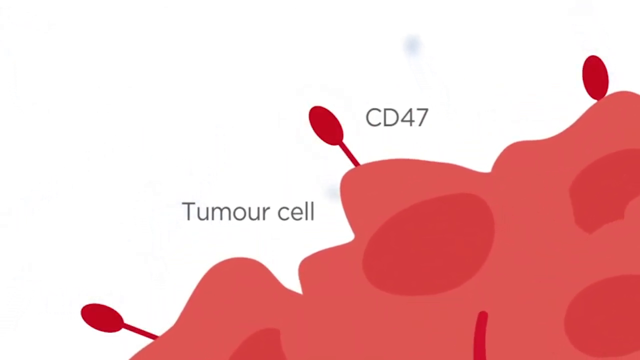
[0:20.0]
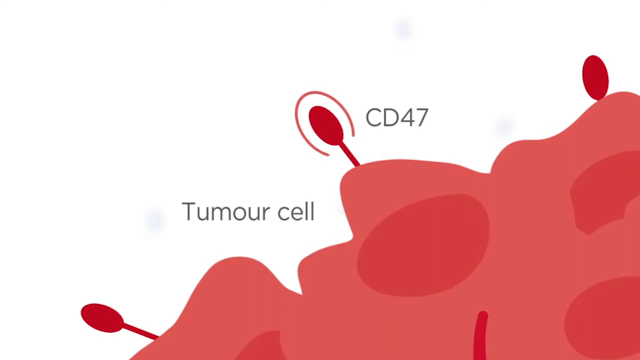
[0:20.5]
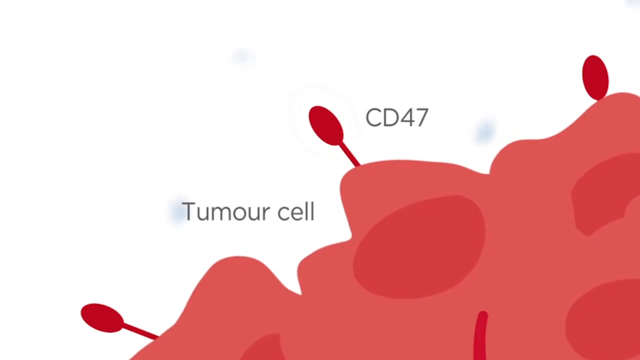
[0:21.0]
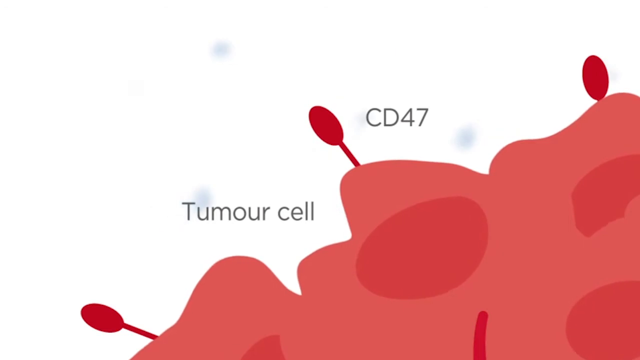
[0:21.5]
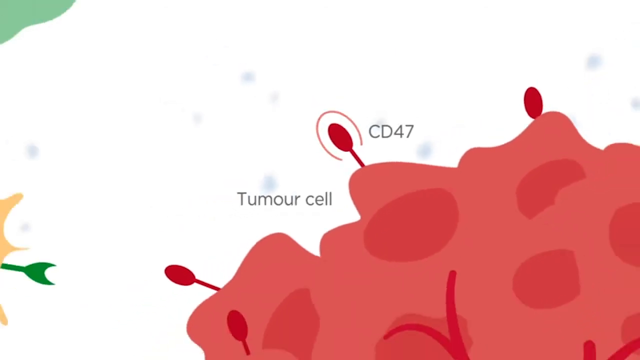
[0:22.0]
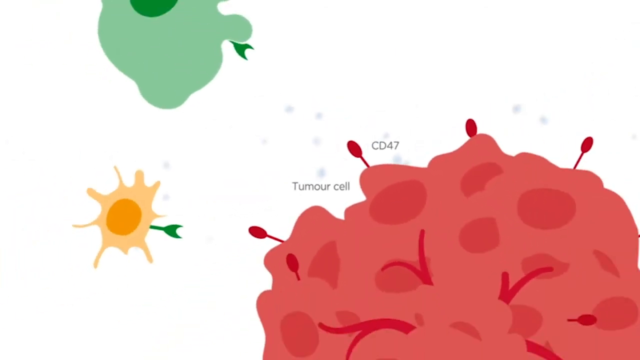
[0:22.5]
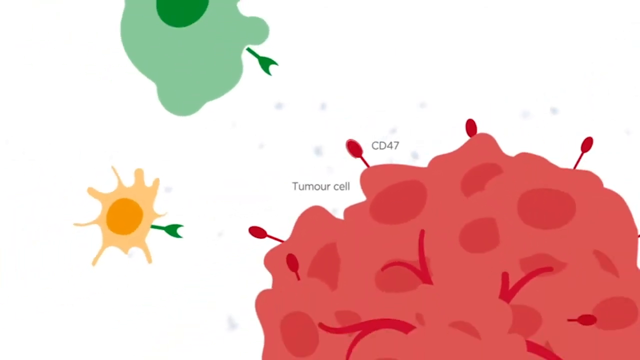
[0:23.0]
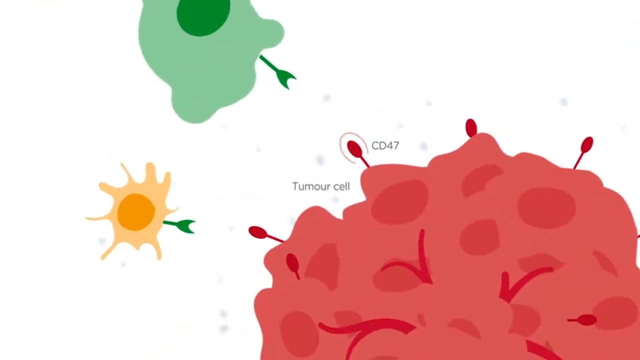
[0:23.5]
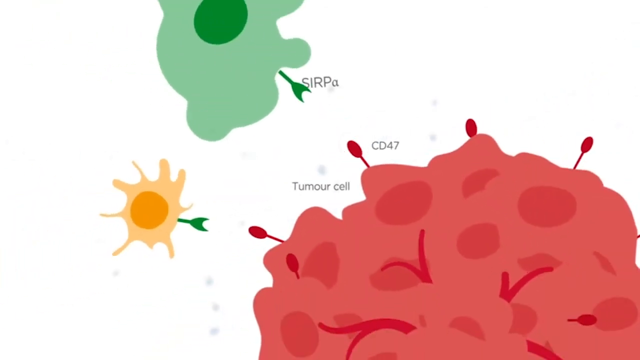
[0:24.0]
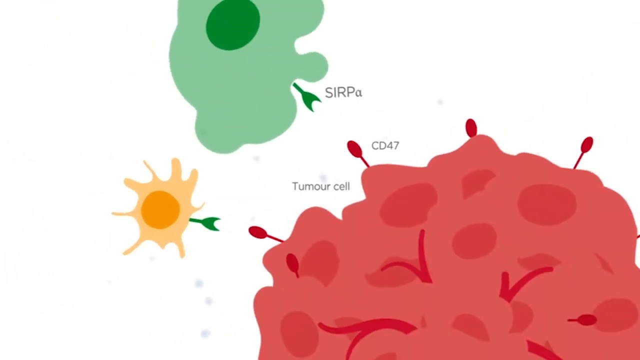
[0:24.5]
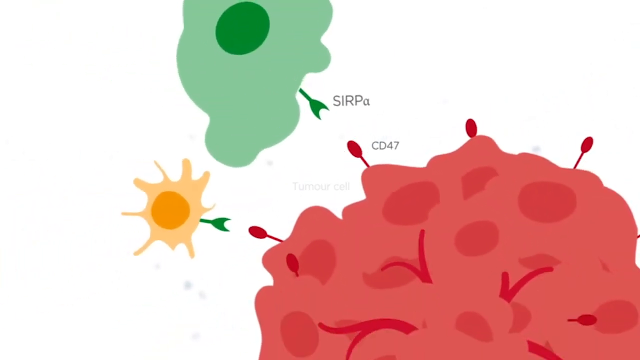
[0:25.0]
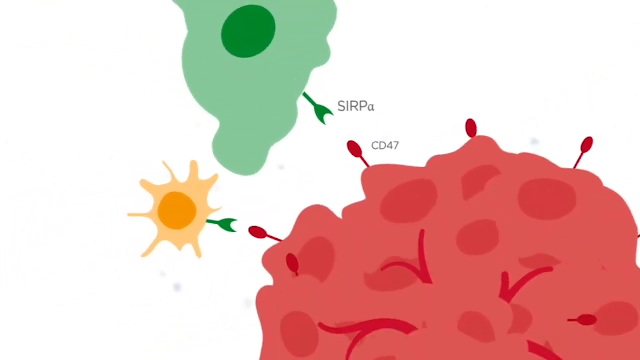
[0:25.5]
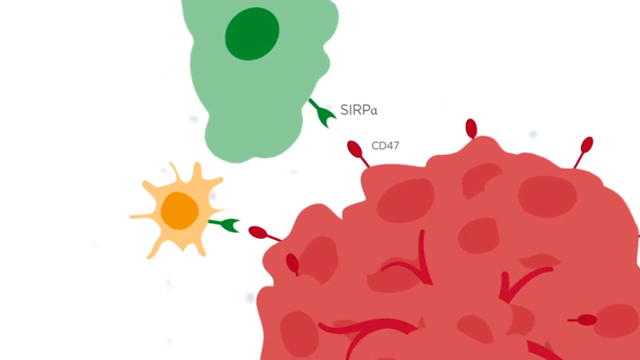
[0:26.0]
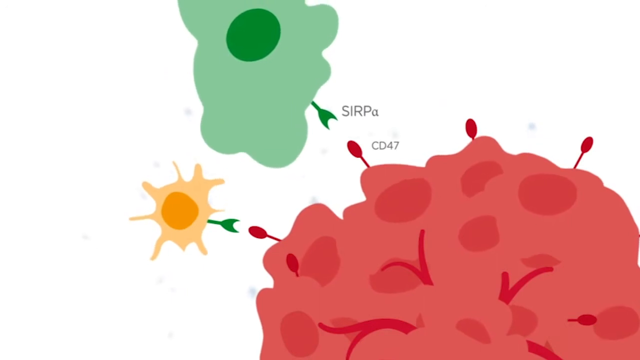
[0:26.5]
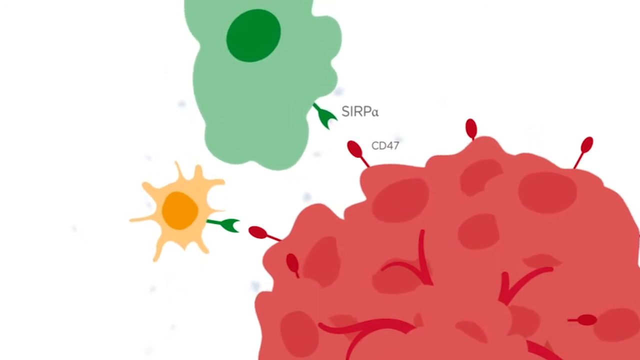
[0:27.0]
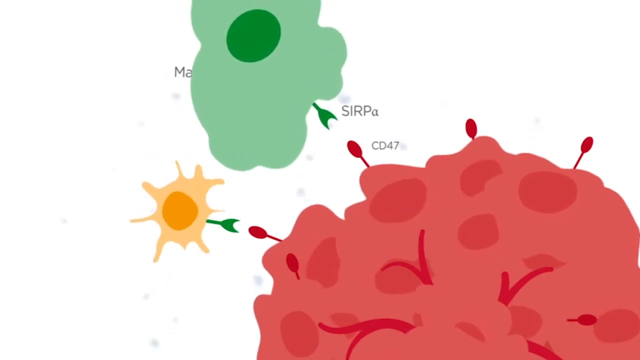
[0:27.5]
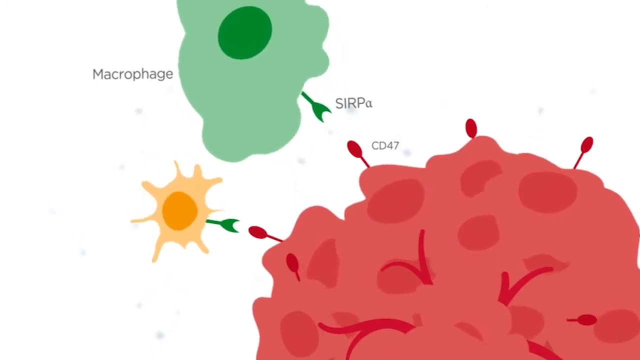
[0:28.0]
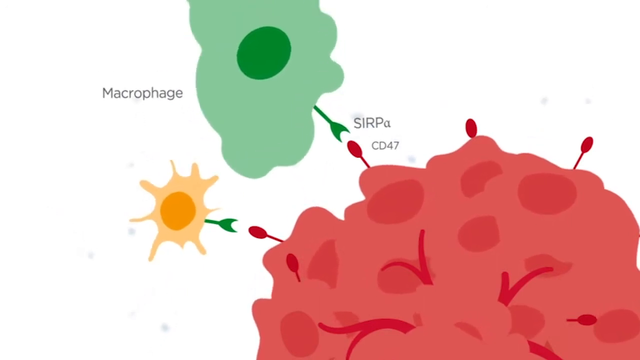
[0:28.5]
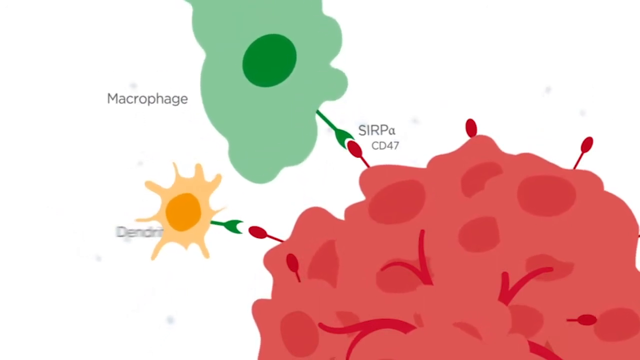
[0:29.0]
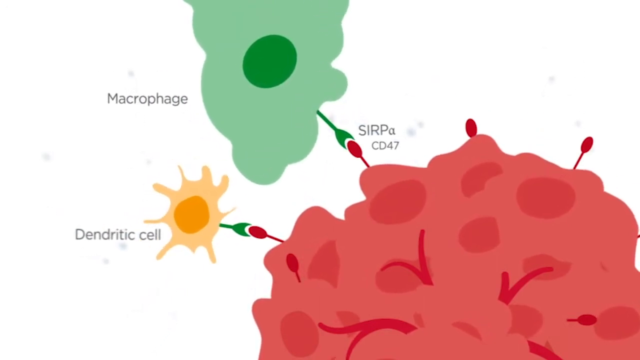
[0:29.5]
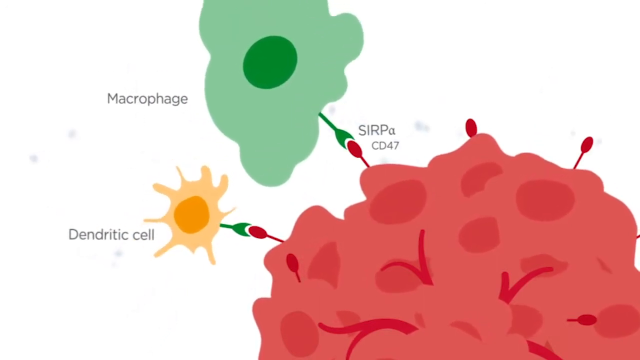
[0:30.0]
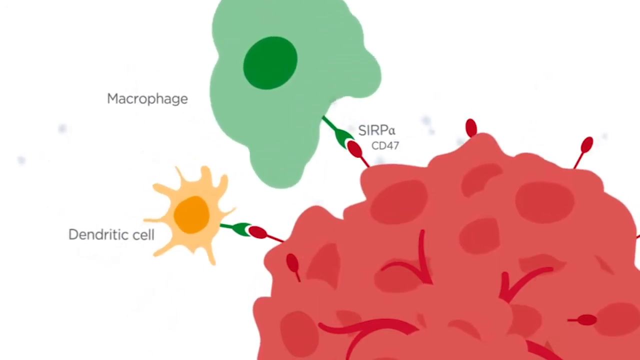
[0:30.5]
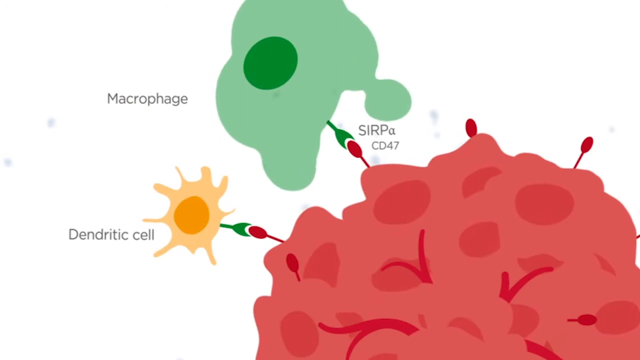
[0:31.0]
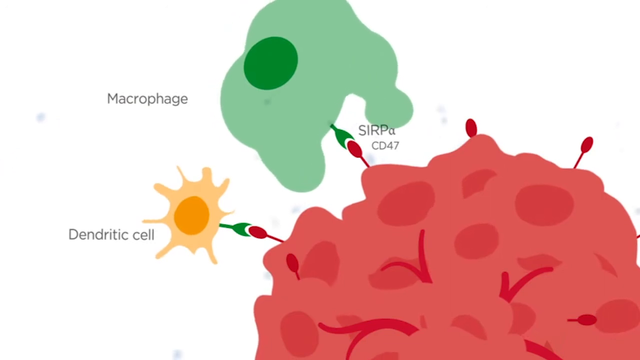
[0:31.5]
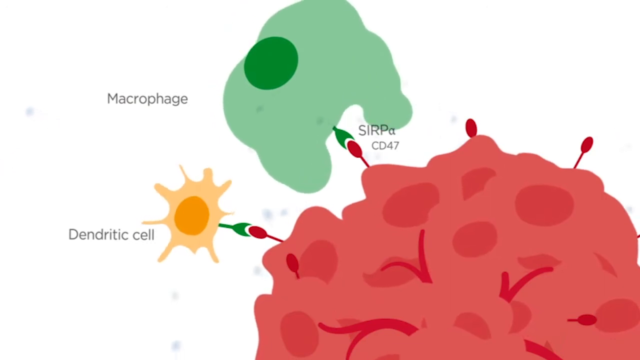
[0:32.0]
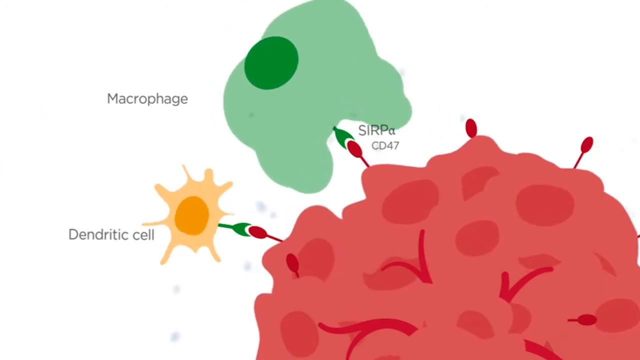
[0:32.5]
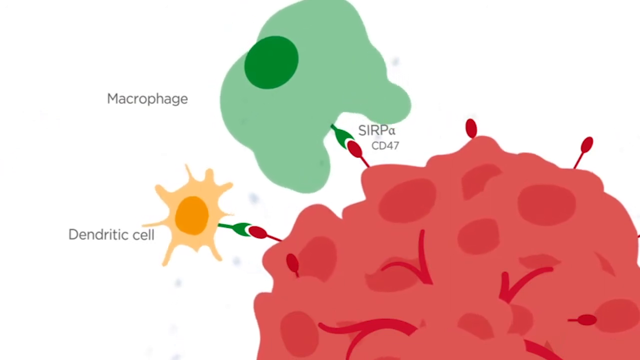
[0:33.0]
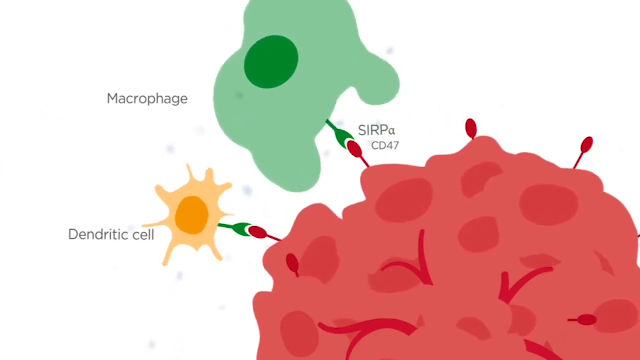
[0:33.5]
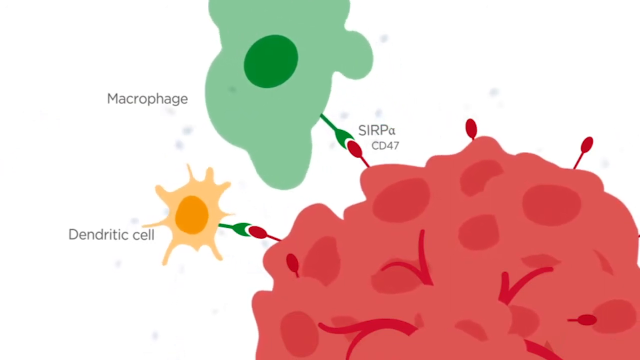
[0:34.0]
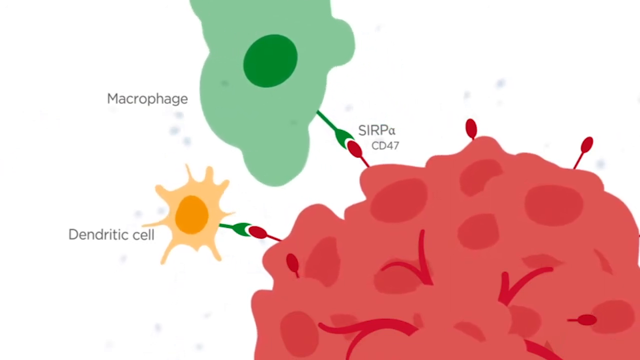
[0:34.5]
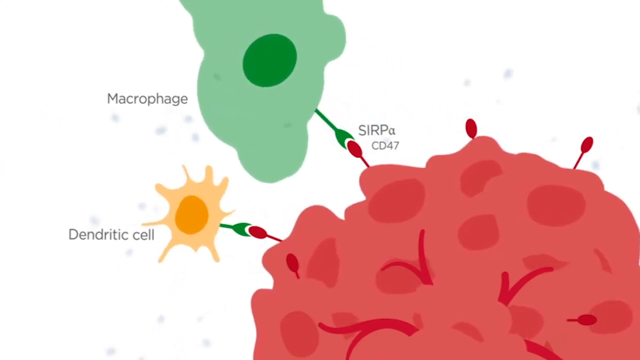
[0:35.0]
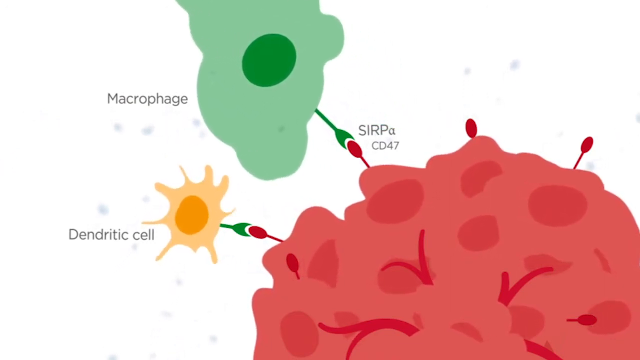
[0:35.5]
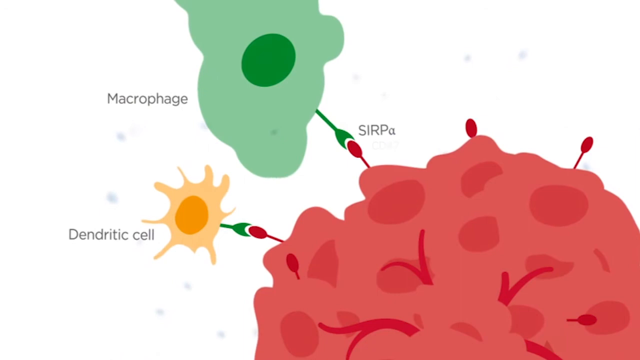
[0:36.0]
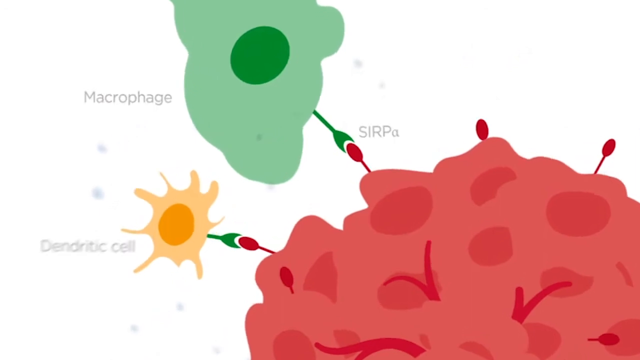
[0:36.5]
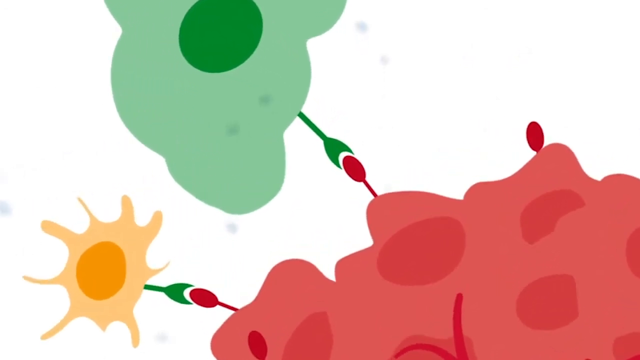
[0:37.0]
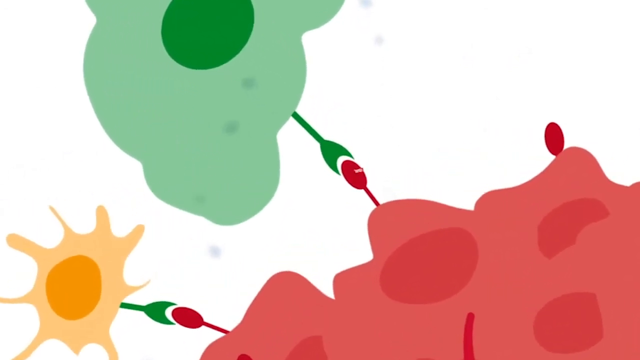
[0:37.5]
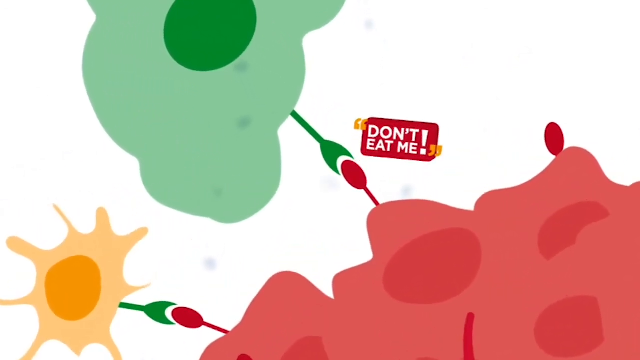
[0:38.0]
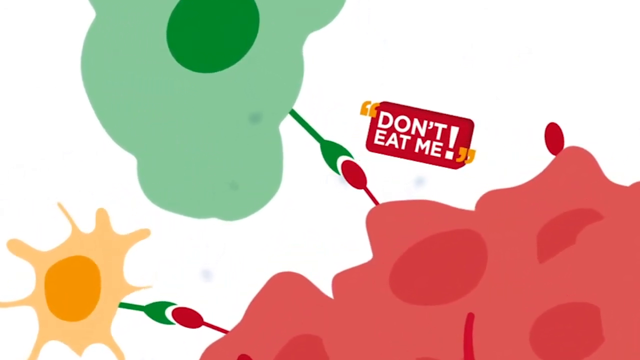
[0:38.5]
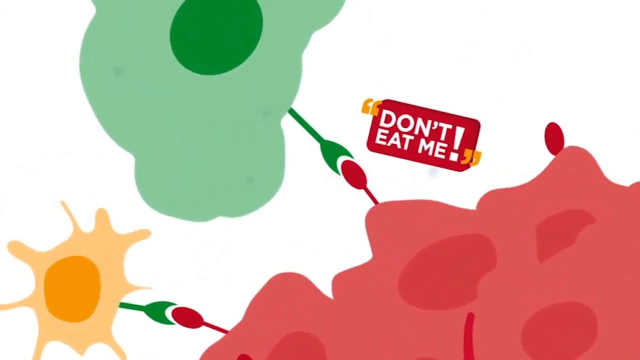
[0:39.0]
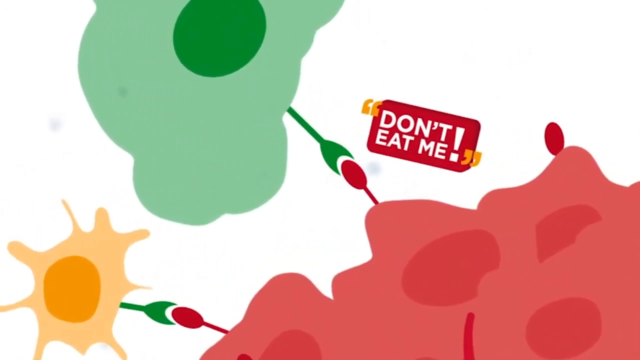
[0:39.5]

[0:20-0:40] Tumor cells, one of which is named CD47, are shown growing, and there are many of them. Macrophages, SARPA and dendritic cells also appear. Two types of cells try to eat the tumor cells, and the tumor cells ask not to be eaten, with the phrase "don't eat me" shown.